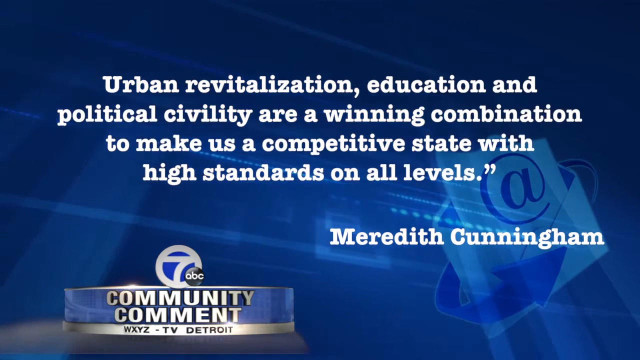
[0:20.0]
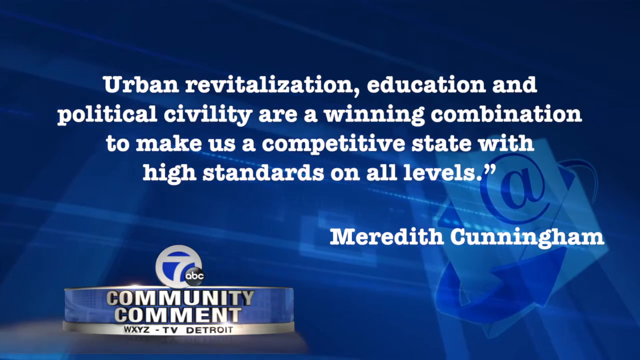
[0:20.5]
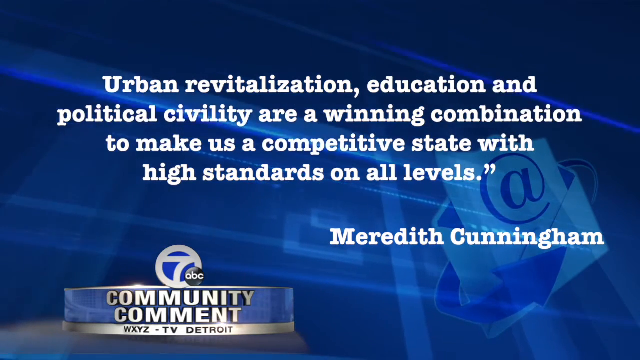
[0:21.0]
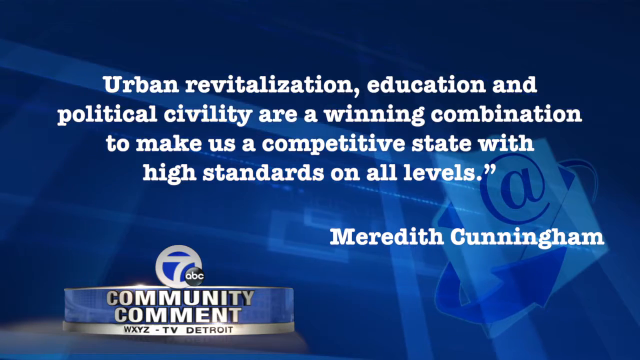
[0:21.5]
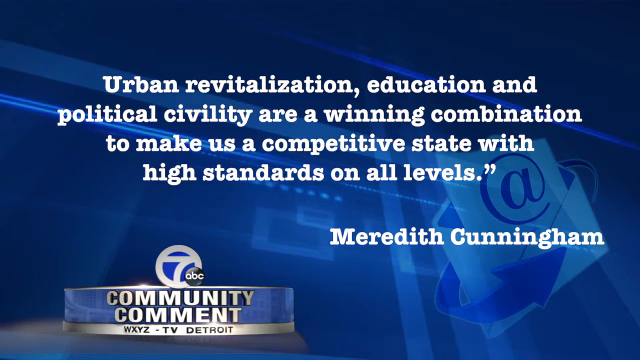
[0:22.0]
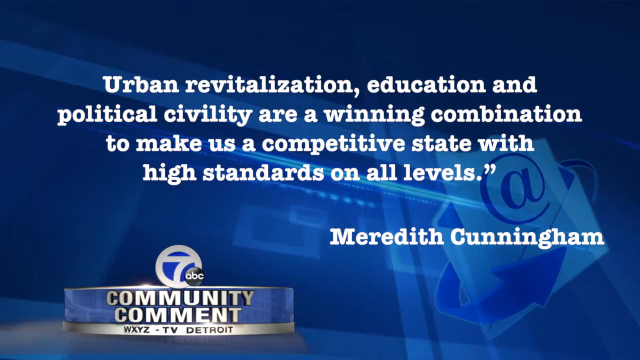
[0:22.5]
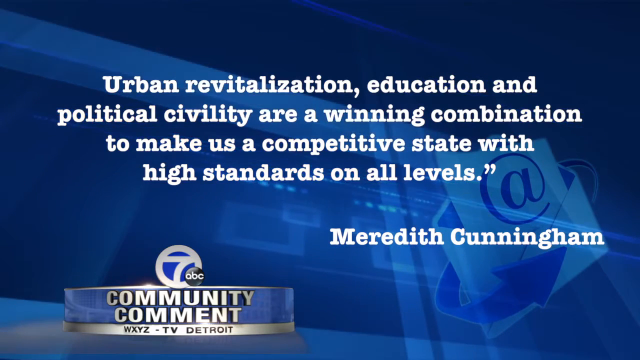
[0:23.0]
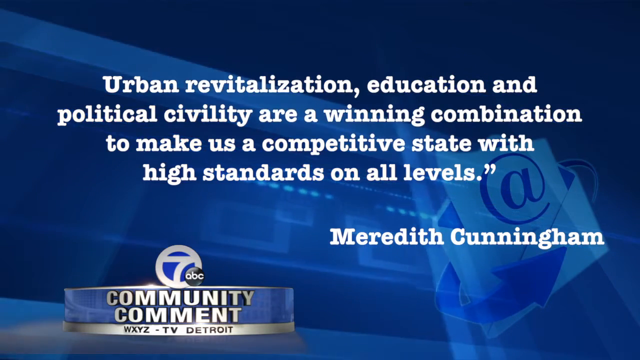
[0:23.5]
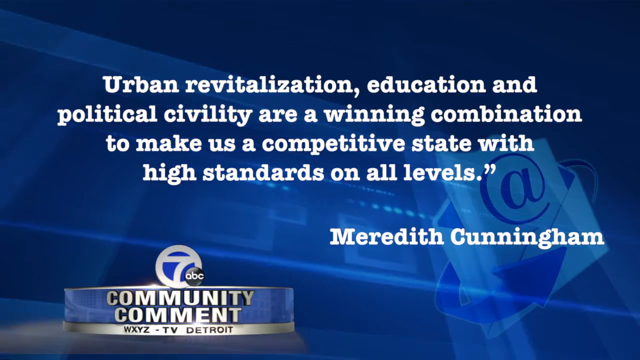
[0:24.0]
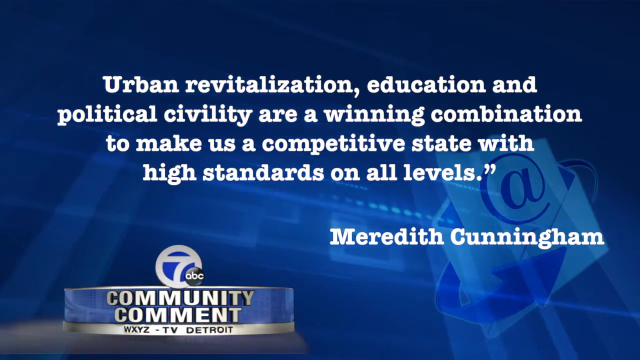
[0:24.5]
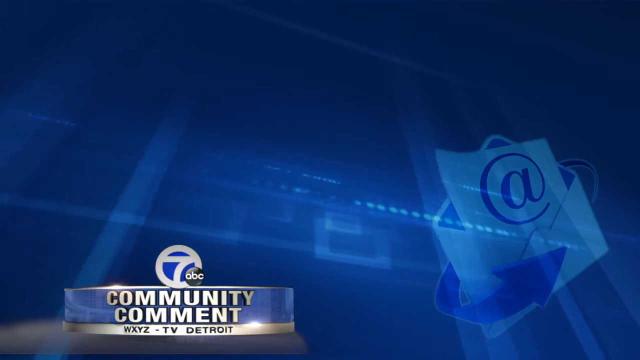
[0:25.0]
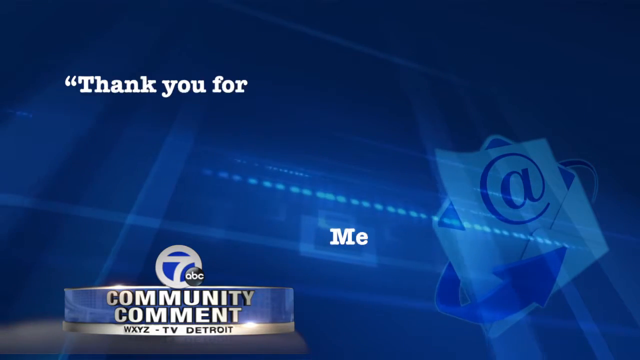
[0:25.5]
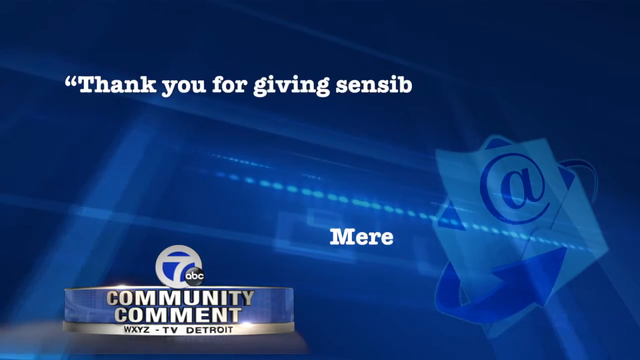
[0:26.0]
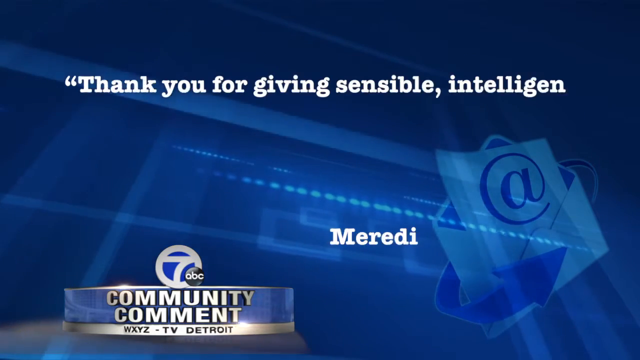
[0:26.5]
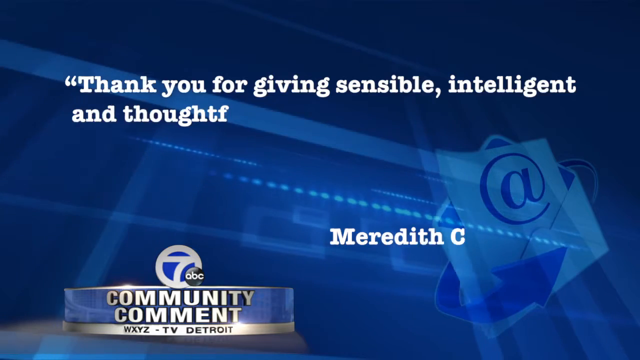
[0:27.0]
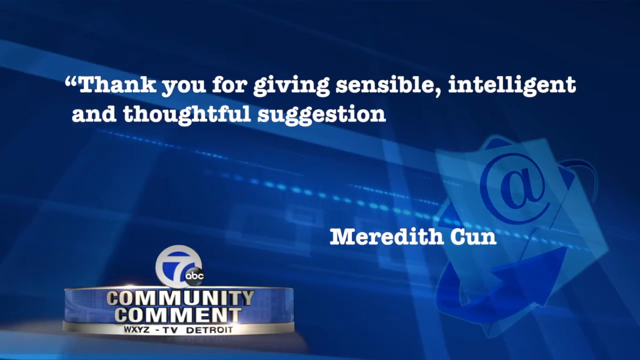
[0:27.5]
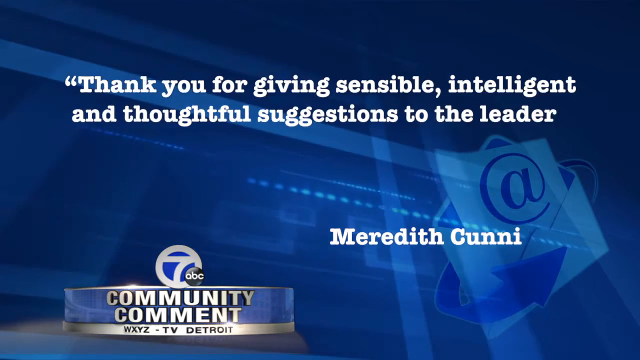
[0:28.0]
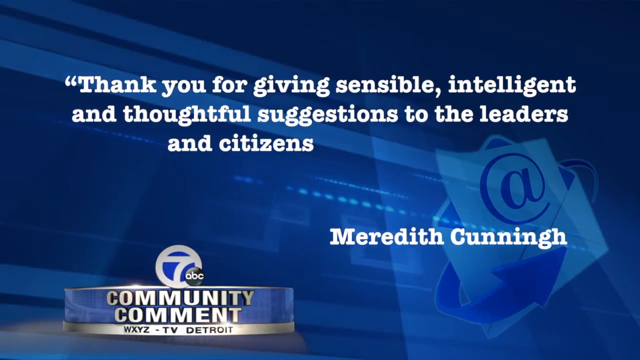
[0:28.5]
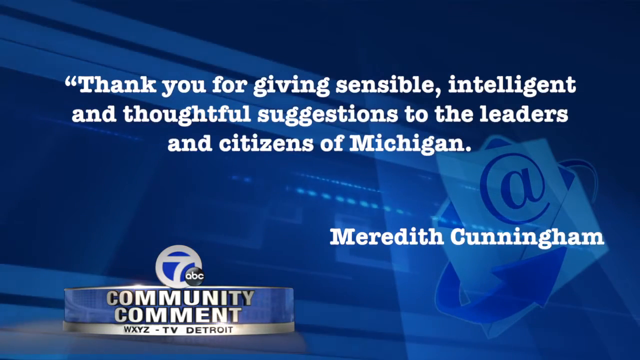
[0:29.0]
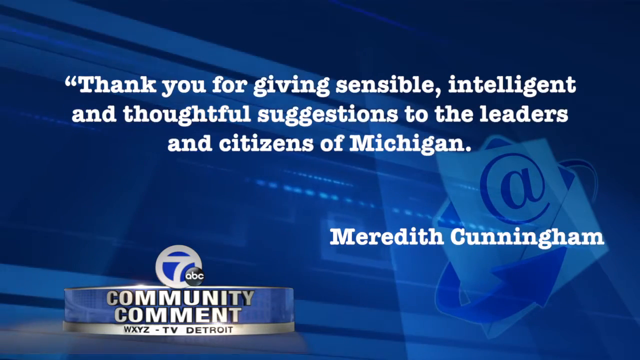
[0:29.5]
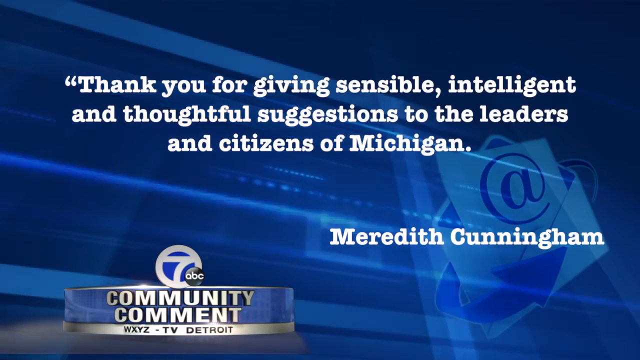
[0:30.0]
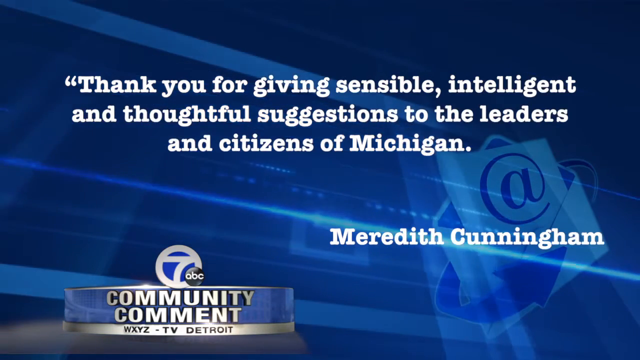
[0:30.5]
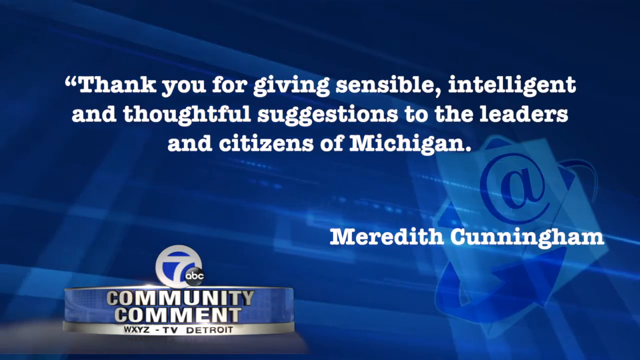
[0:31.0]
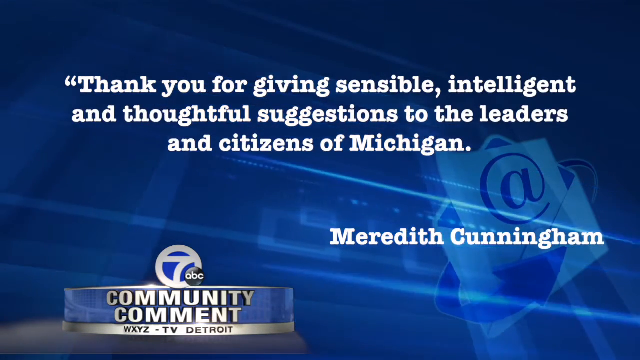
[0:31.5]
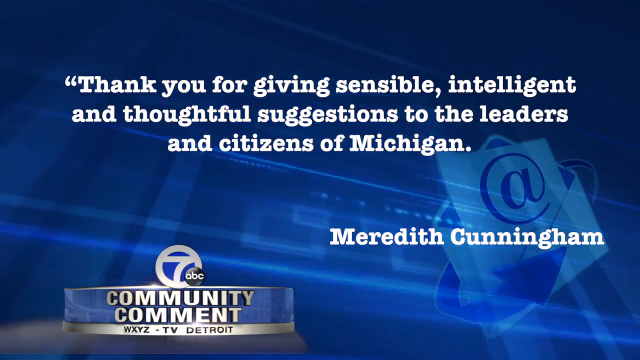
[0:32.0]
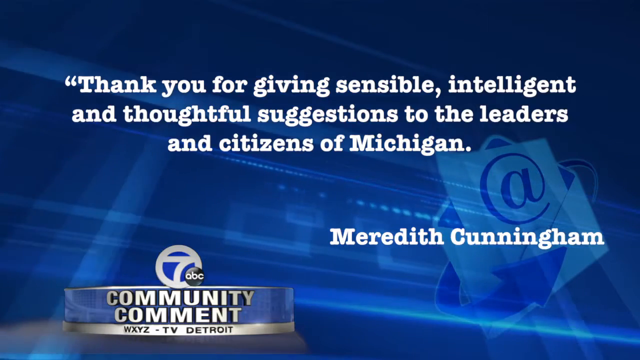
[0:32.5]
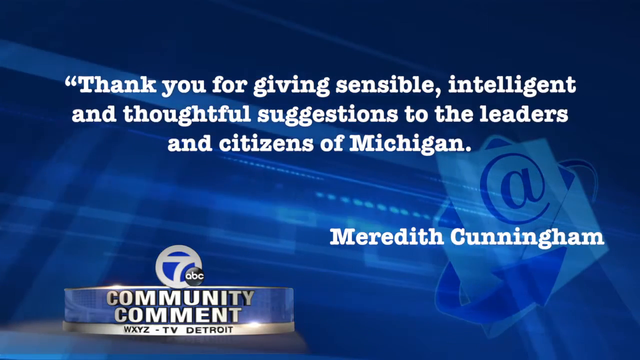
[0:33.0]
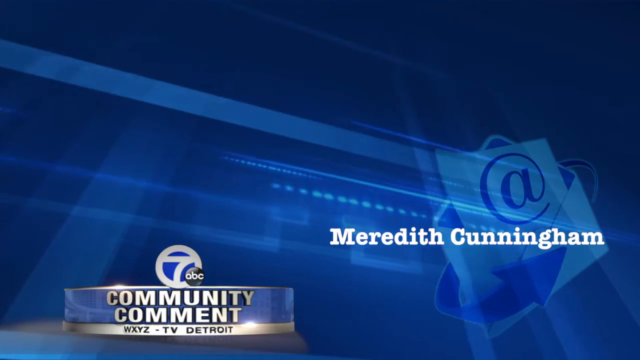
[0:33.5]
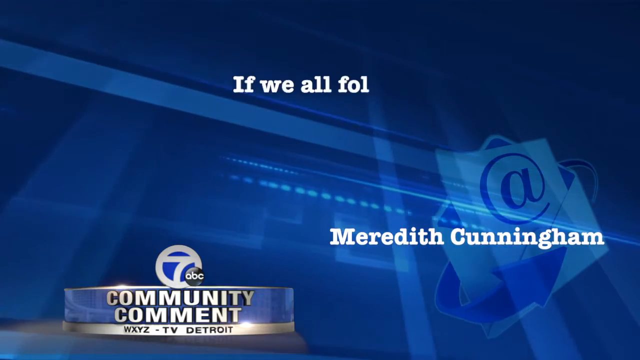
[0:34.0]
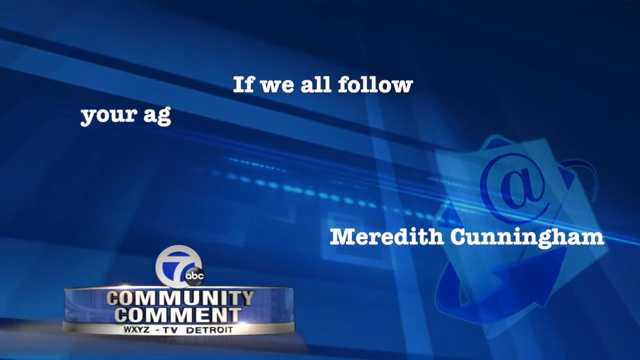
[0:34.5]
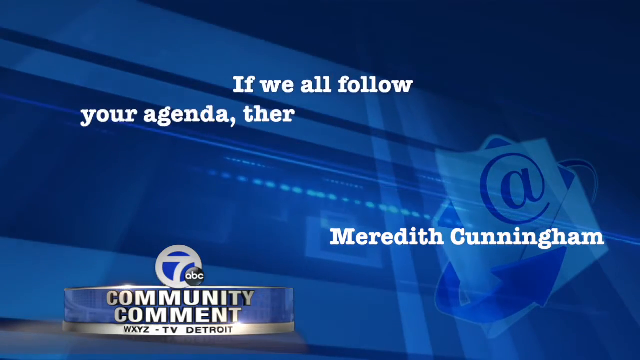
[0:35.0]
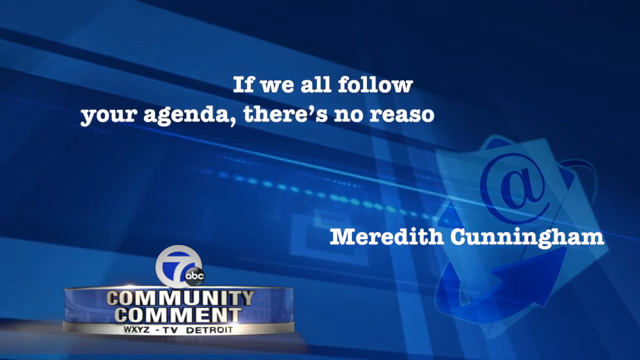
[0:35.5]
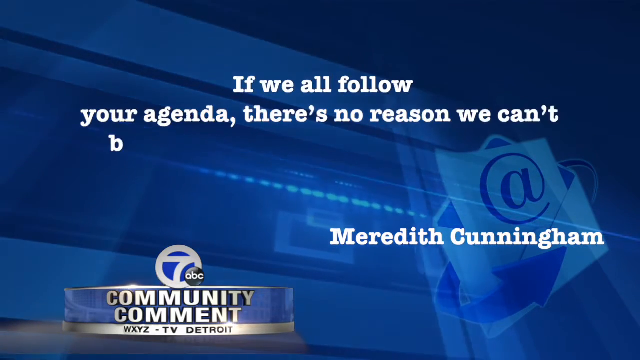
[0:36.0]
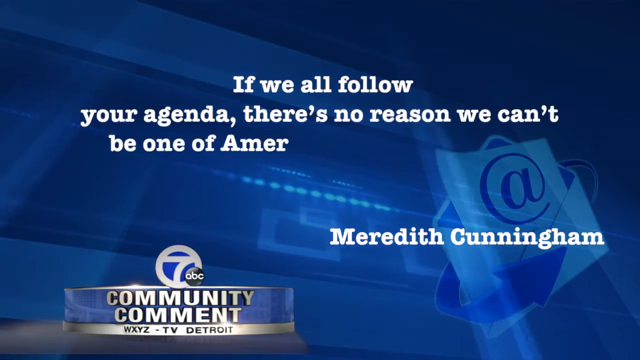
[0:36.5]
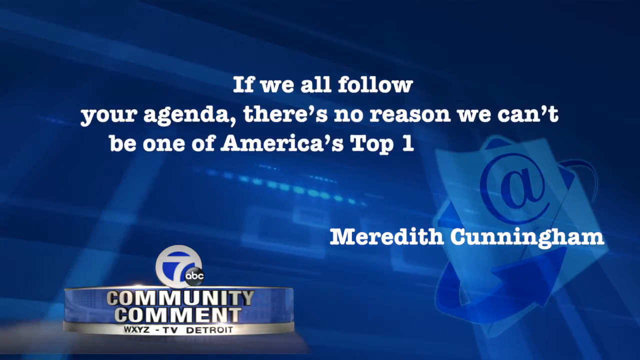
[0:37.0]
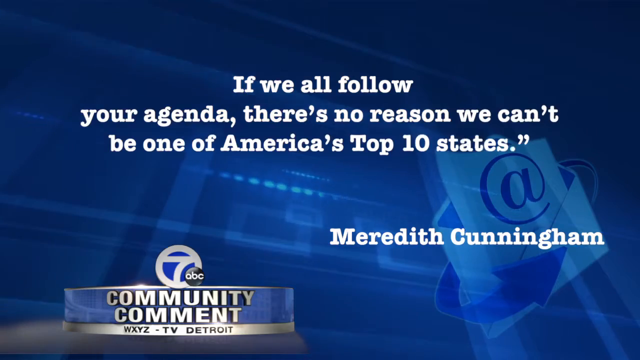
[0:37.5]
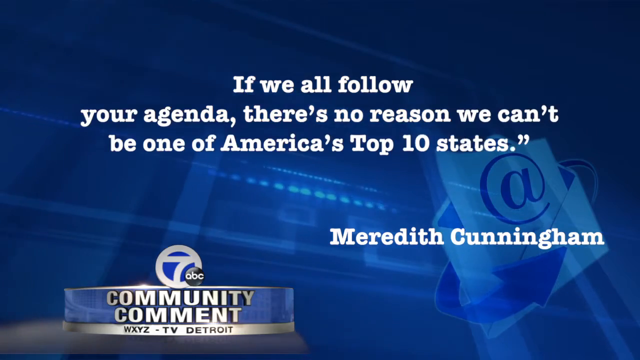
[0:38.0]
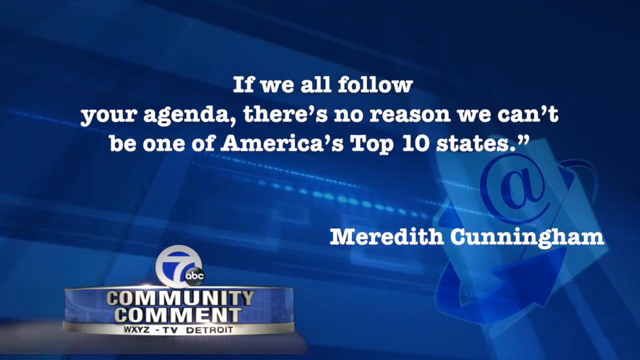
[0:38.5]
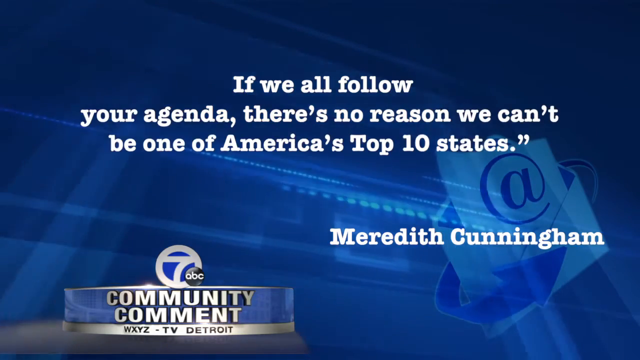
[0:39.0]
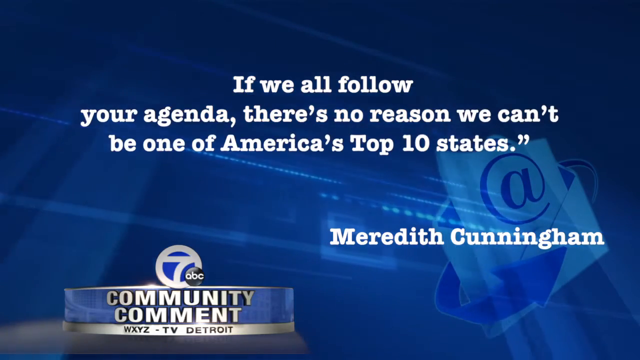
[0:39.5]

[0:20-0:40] A quote from Meredith Cunningham reads: "urban revitalization, education, and political civility are a winning combination to make us a competitive state with high standards on all levels." It continues: "thank you for giving sensible, intelligent, and thoughtful suggestions to the leaders and citizens of Michigan. If we all follow your agenda, there's no reason we can't be one of America's top 10 states." "ABC TV community comment" is shown. The background of the screen is green with an art sample and several faded white stripes. The uppermost right of the screen is black, and the screen is animated with dark green.